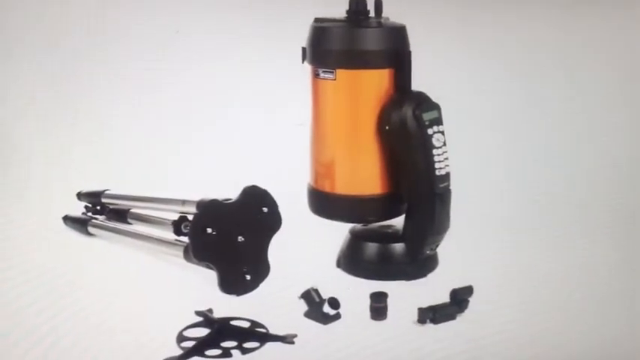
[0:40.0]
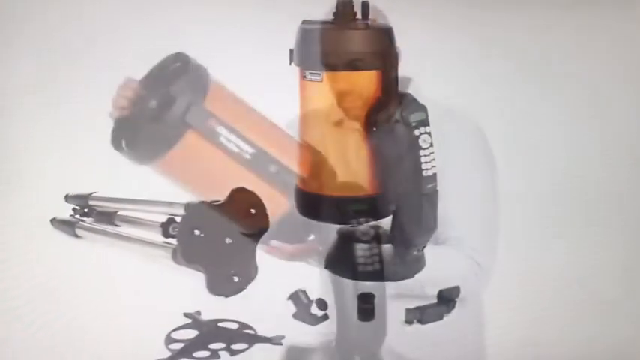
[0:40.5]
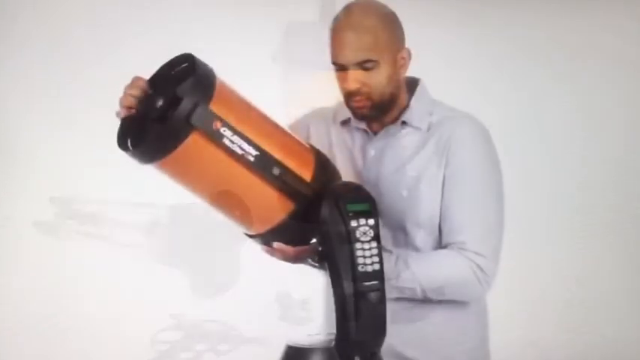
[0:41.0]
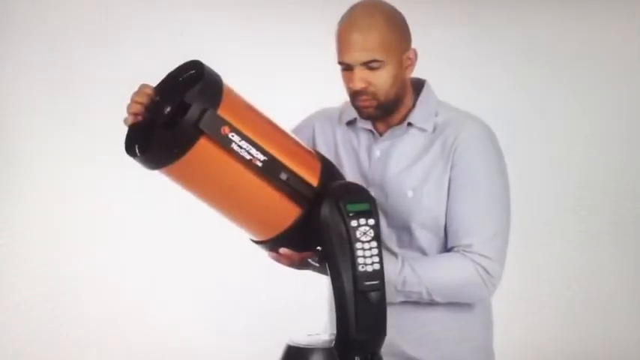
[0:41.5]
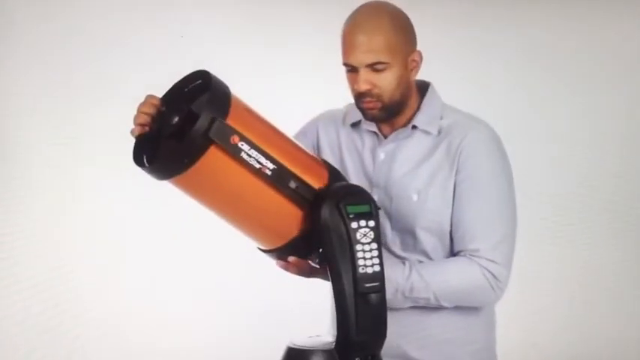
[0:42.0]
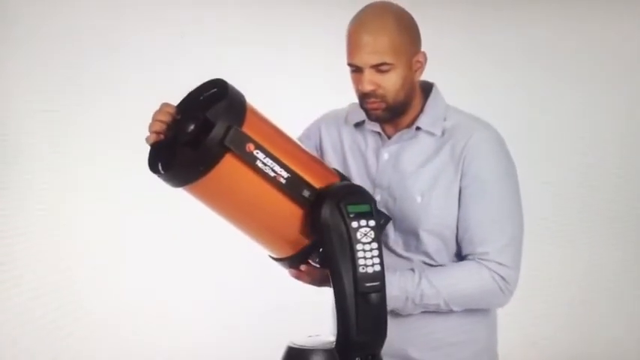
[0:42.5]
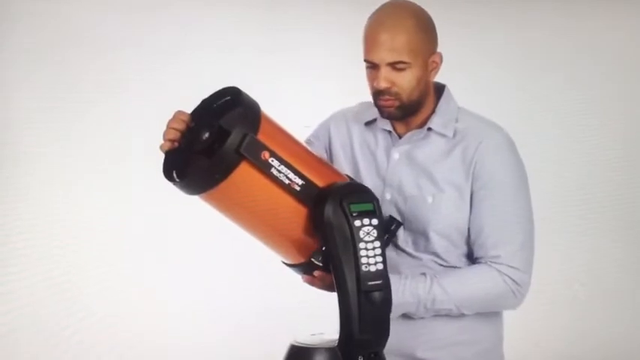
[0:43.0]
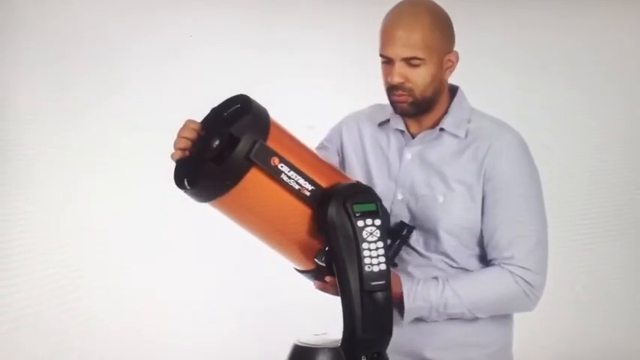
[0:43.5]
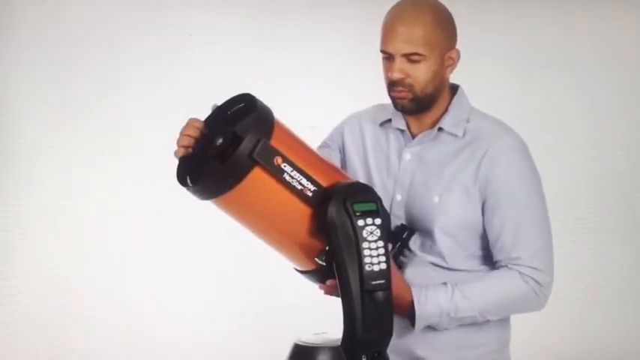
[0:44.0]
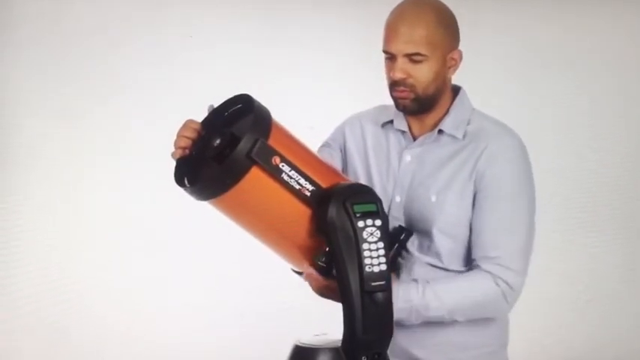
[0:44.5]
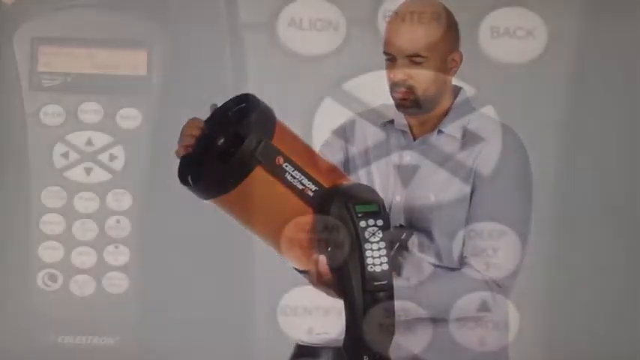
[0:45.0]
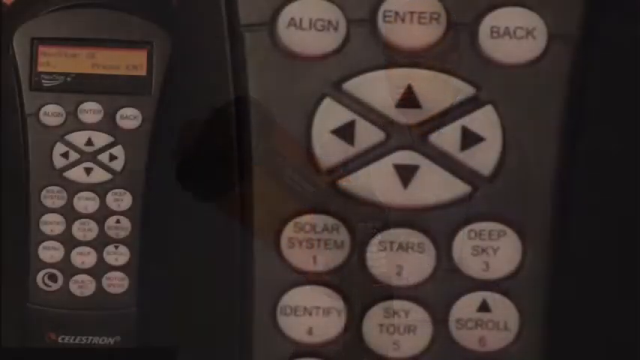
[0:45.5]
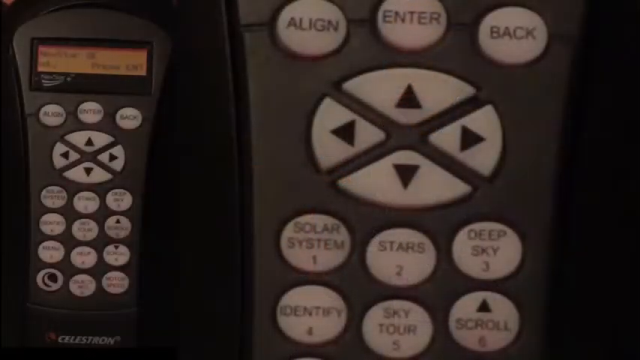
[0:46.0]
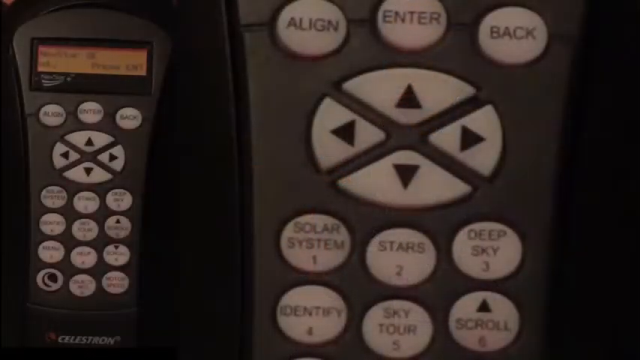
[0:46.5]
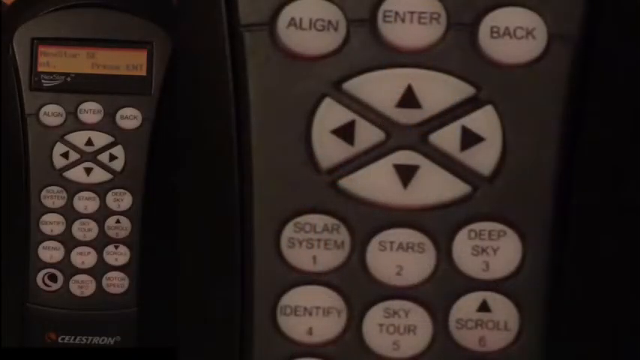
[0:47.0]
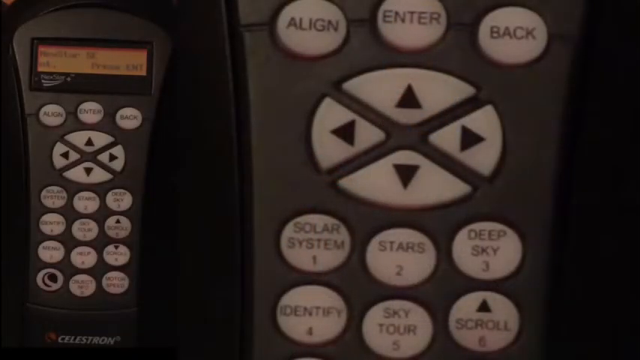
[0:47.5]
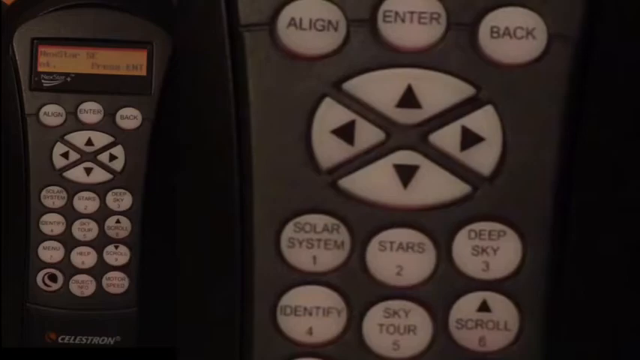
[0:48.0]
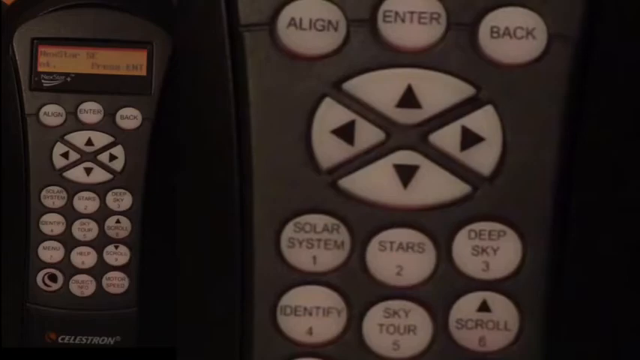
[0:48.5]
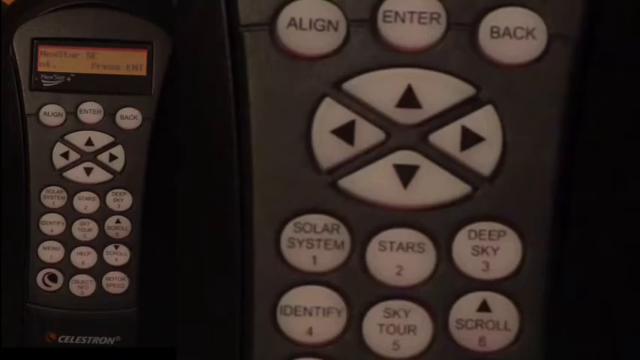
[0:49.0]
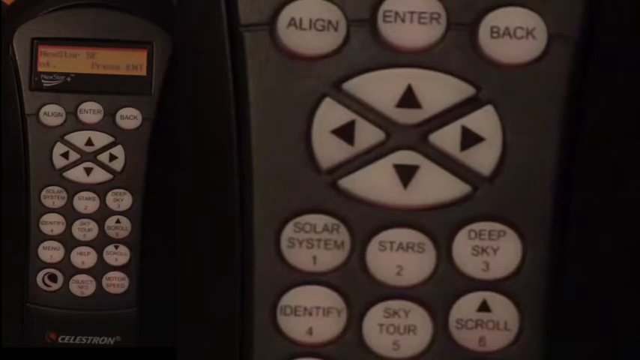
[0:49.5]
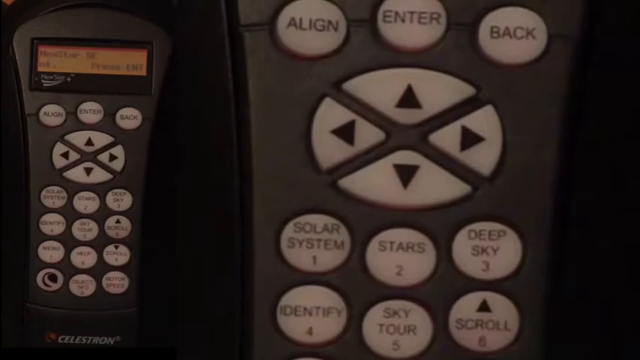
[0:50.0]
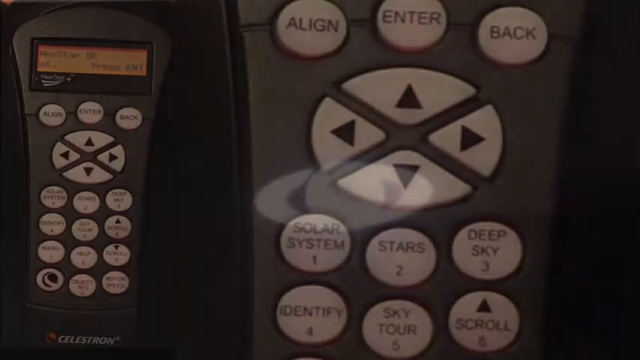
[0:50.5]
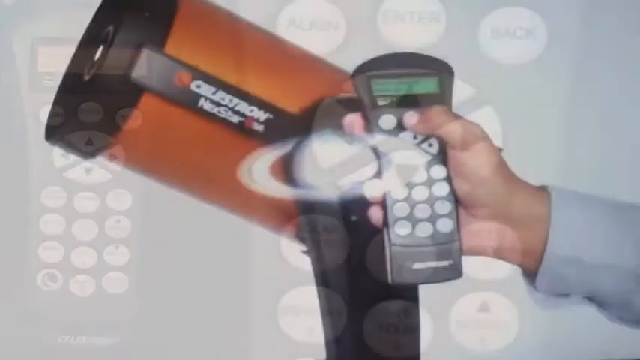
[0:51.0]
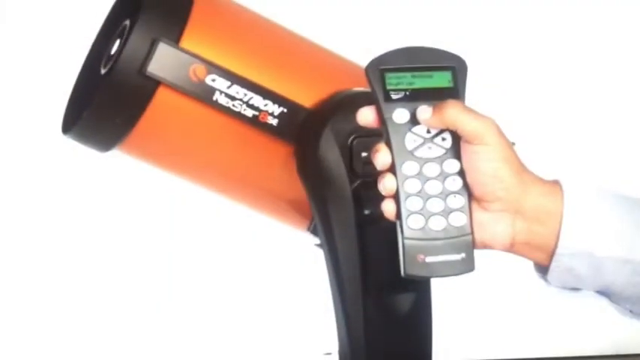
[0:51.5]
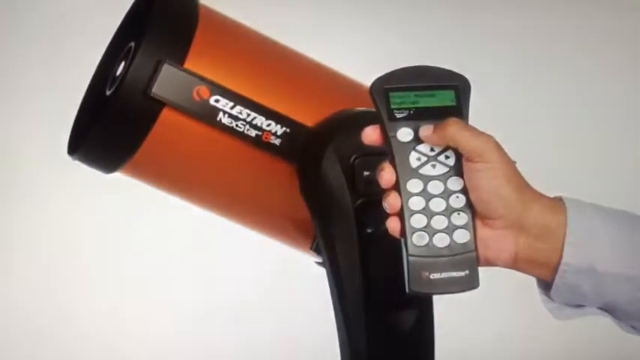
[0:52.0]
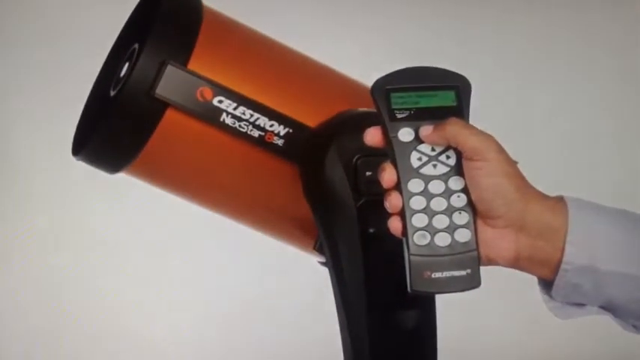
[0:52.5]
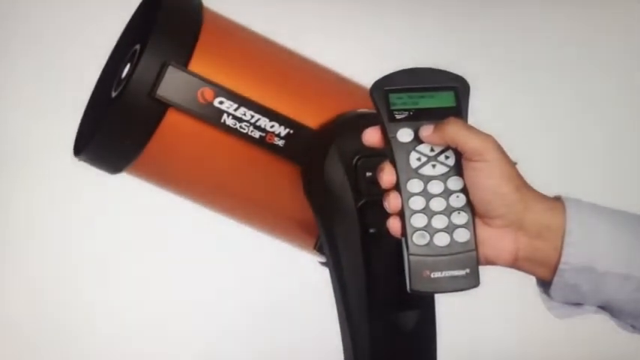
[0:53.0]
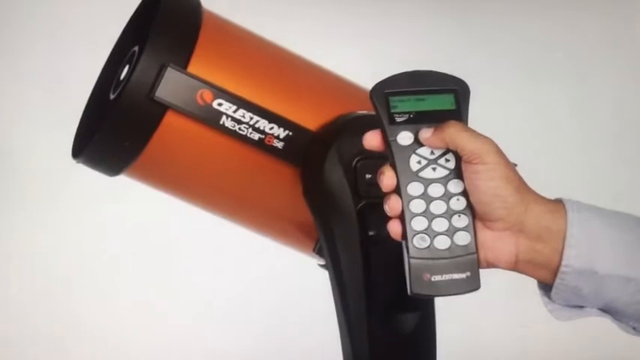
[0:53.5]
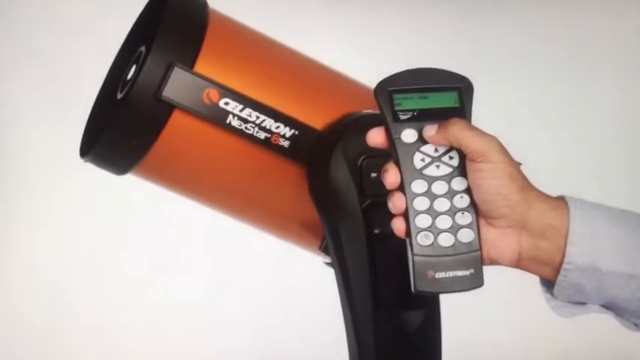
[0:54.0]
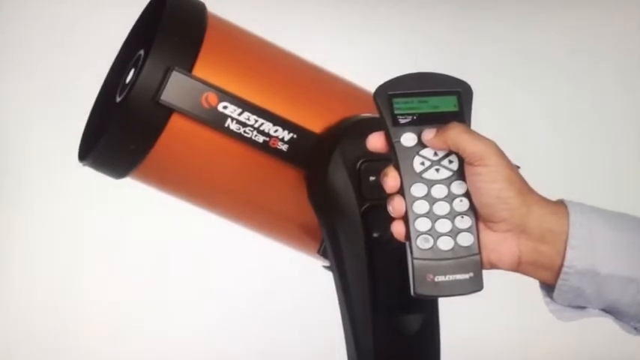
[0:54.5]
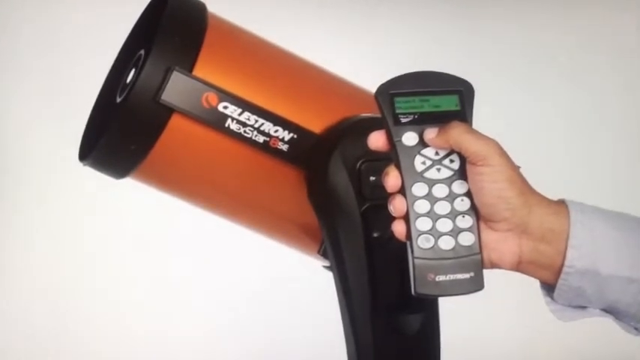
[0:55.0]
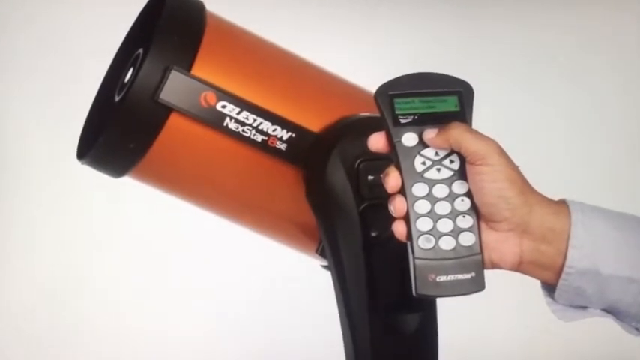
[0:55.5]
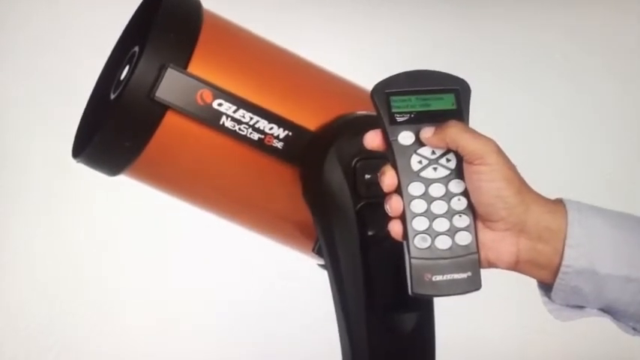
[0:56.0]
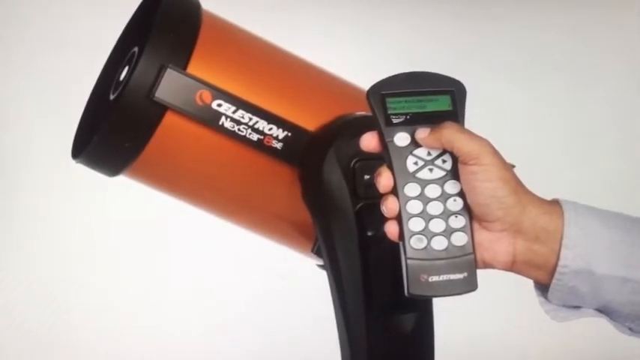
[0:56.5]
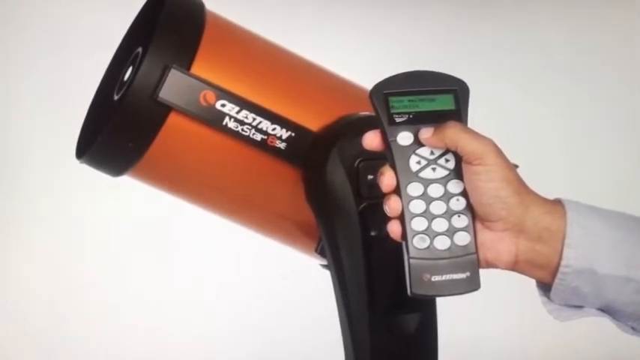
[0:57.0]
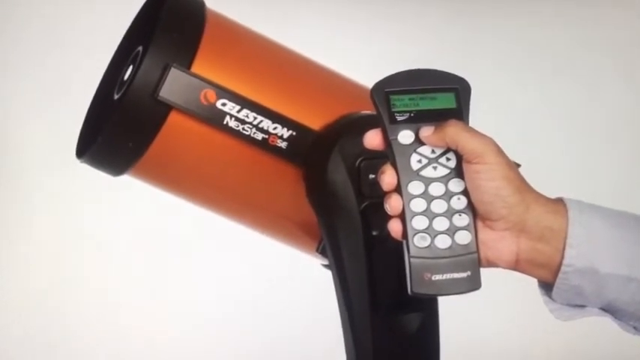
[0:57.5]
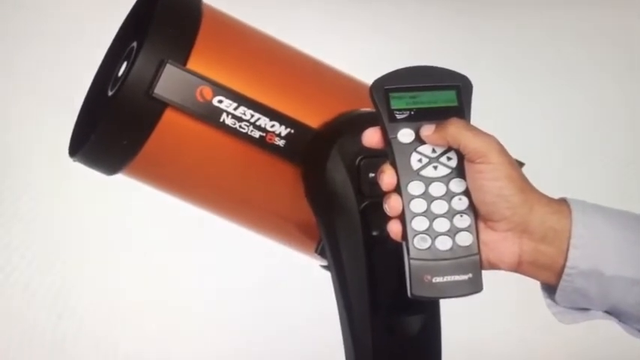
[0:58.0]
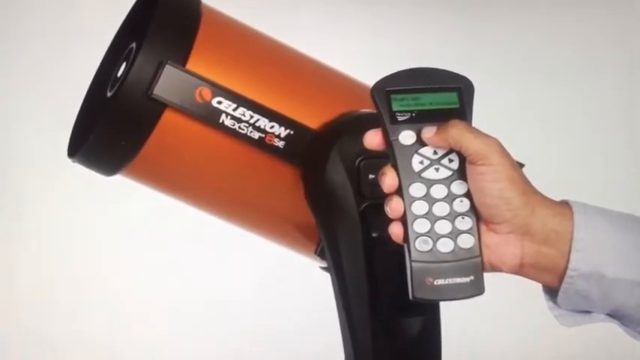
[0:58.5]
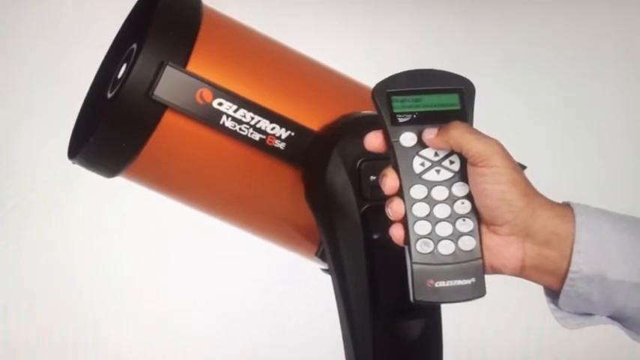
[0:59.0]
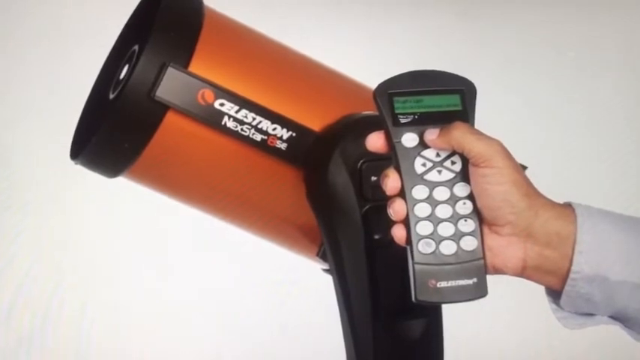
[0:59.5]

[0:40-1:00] A black and orange telescope appears on a white background. Attached to it is a thing that kind of looks like a phone but has a bunch of white buttons on it. What looks to be a tripod is to the left, along with some of the included black accessories. The video then transitions to a man holding the device, which is very large. He is bald and wears a gray-white long-sleeved collared button shirt, and he attaches a part onto a black object. A close-up shows the buttons: align, enter, back, up, down, right and left arrow buttons, solar system, stars, deep sky, identify, sky tour, and scroll. To the left, the same area with the buttons is shown from a distance, which also reveals a display screen. Next, a man holds the area with all of the buttons in front of the Celestron X-Star, pushing the up arrow and going through some of the different options on the display screen.